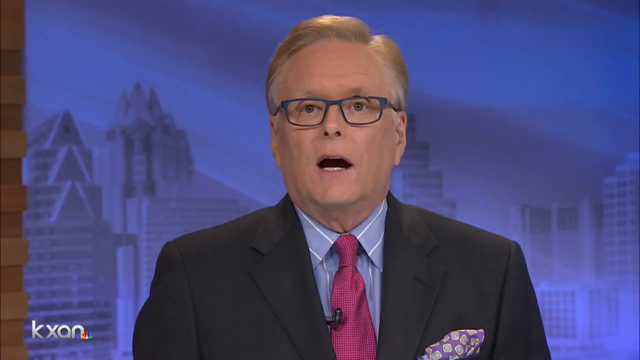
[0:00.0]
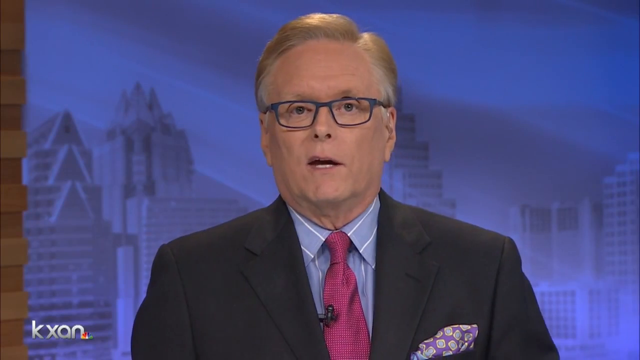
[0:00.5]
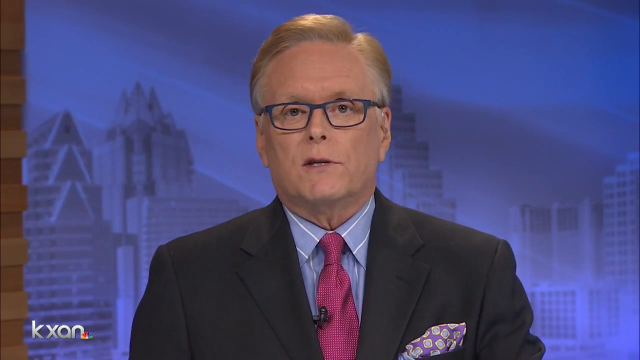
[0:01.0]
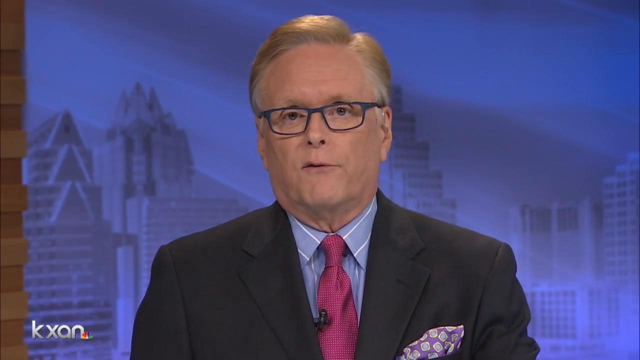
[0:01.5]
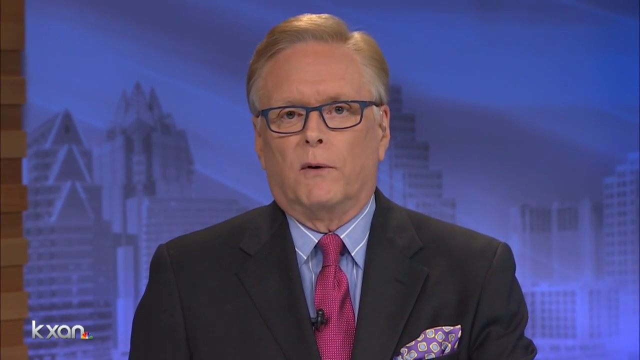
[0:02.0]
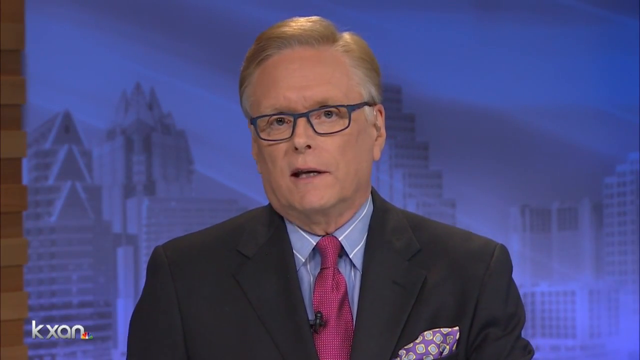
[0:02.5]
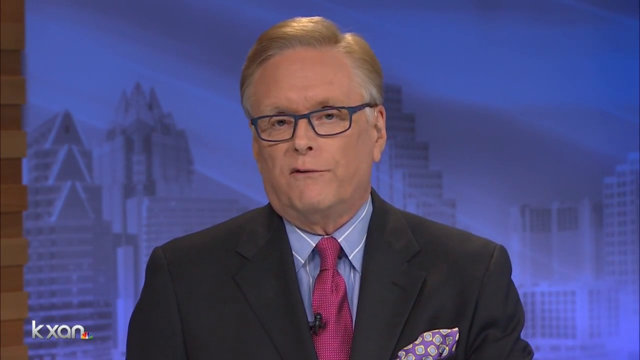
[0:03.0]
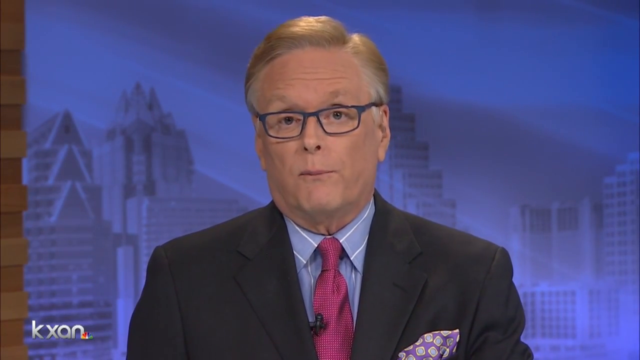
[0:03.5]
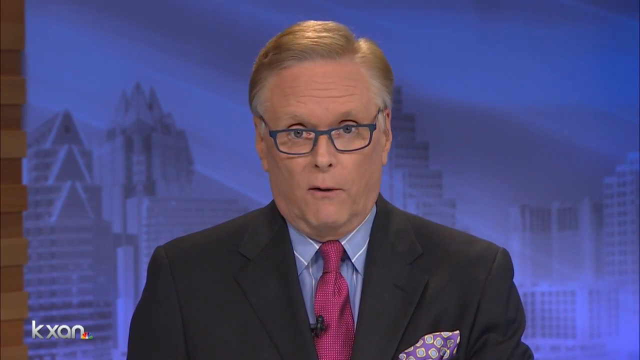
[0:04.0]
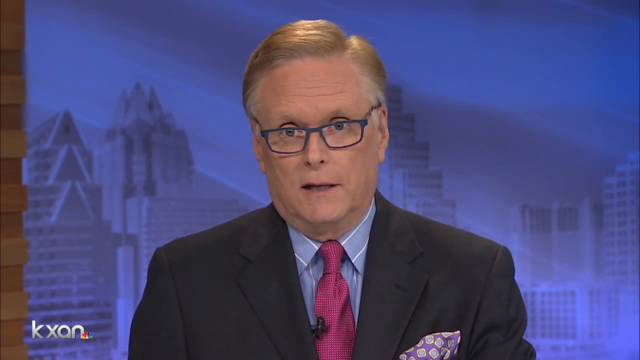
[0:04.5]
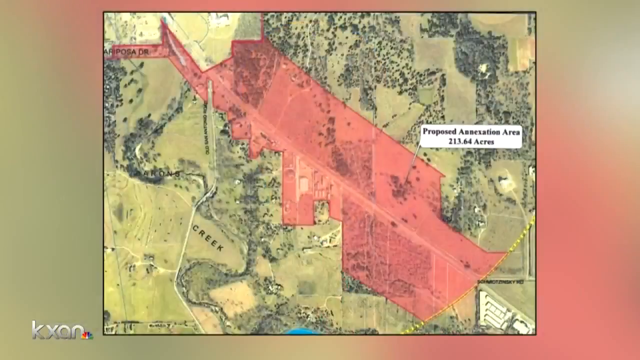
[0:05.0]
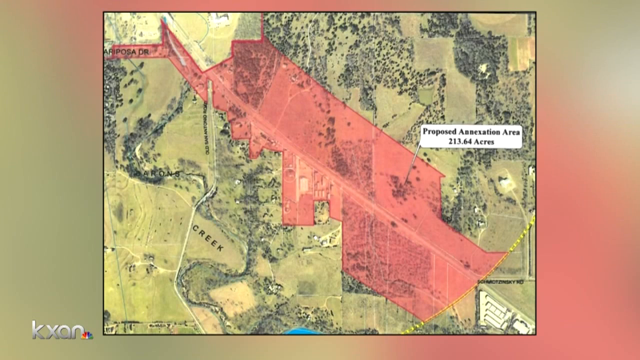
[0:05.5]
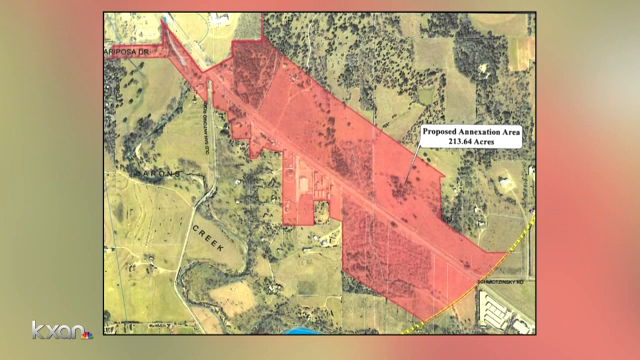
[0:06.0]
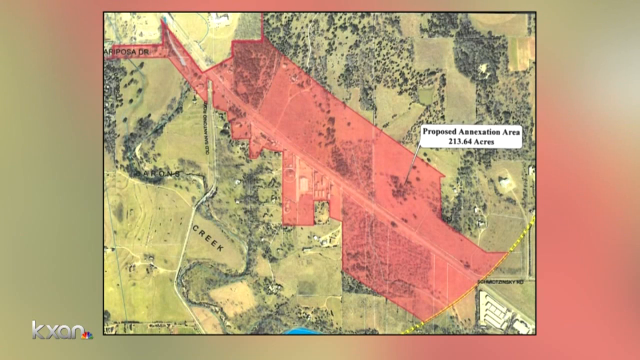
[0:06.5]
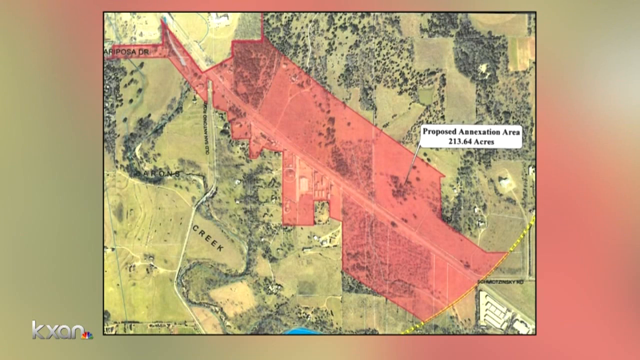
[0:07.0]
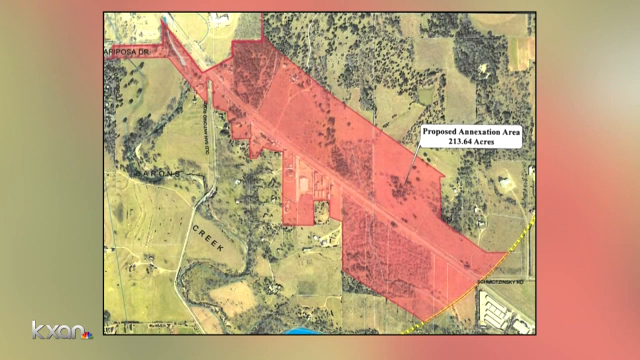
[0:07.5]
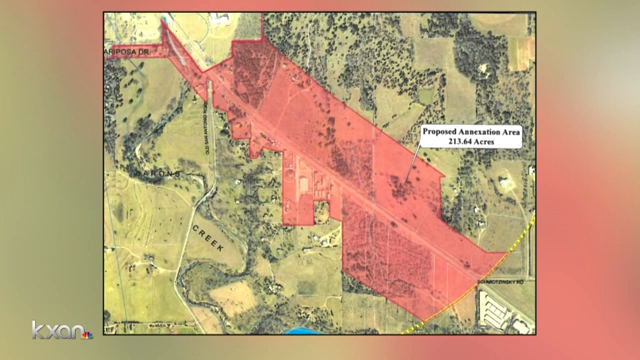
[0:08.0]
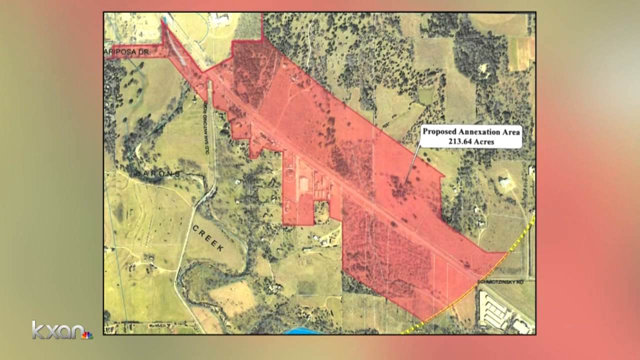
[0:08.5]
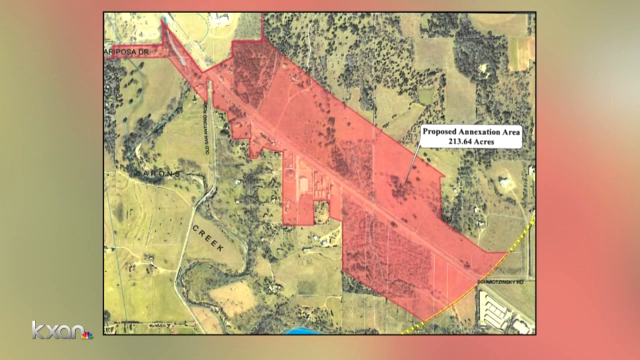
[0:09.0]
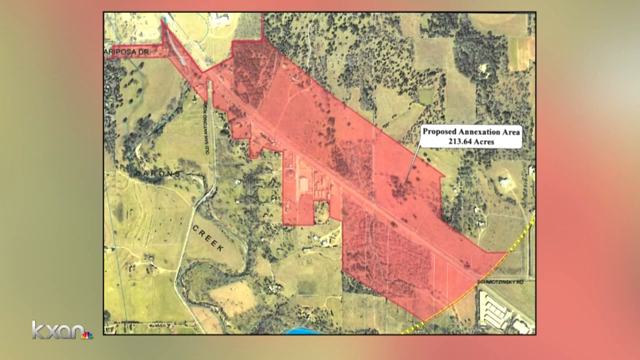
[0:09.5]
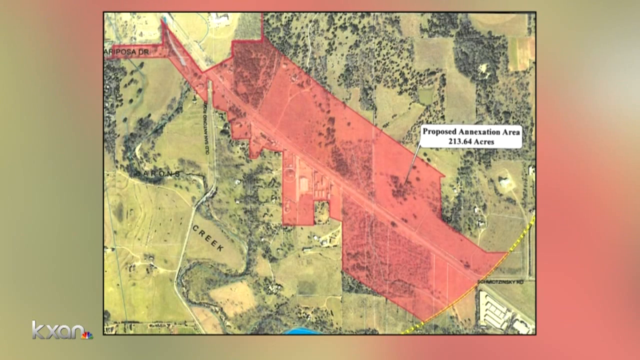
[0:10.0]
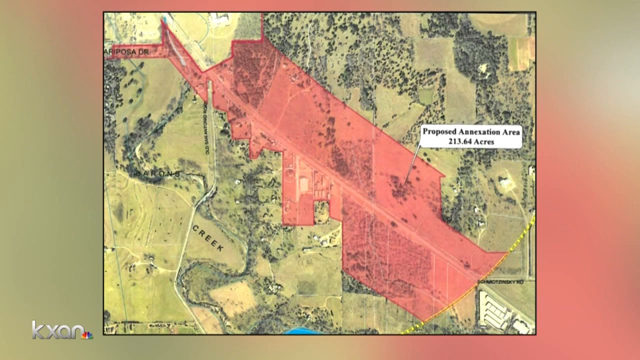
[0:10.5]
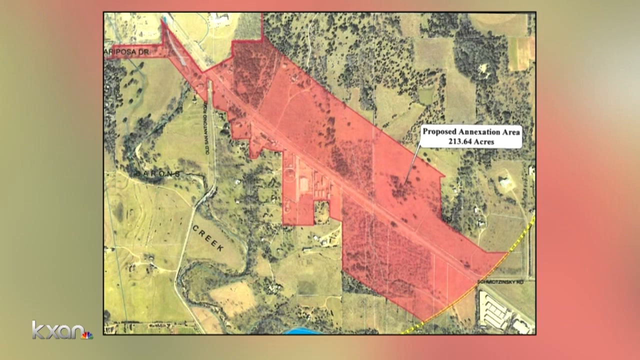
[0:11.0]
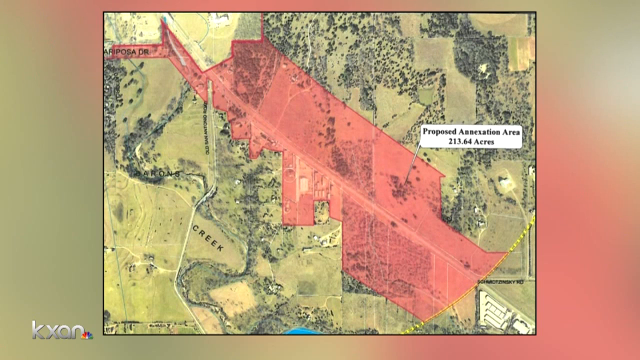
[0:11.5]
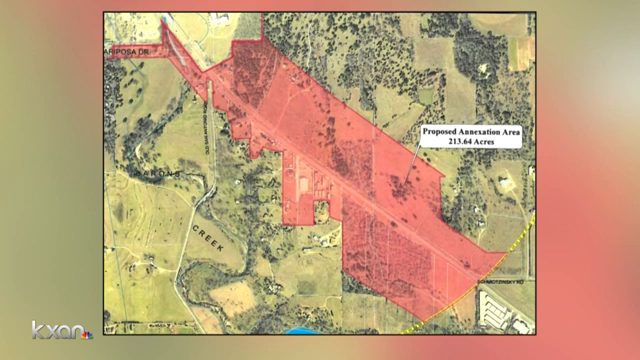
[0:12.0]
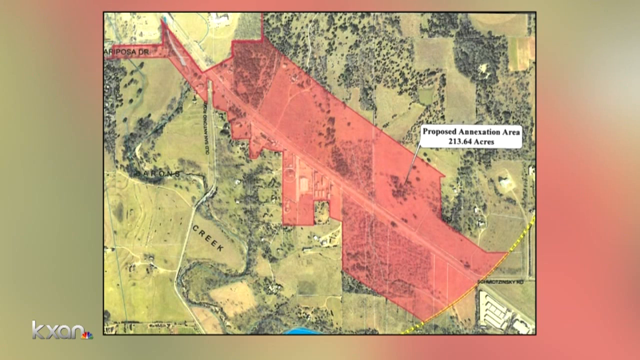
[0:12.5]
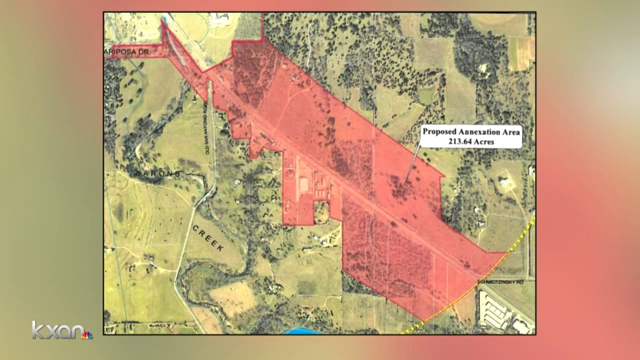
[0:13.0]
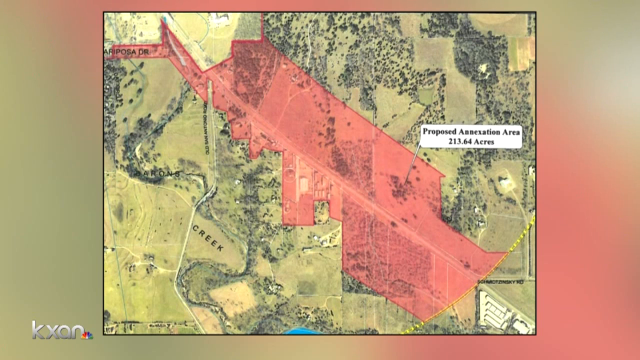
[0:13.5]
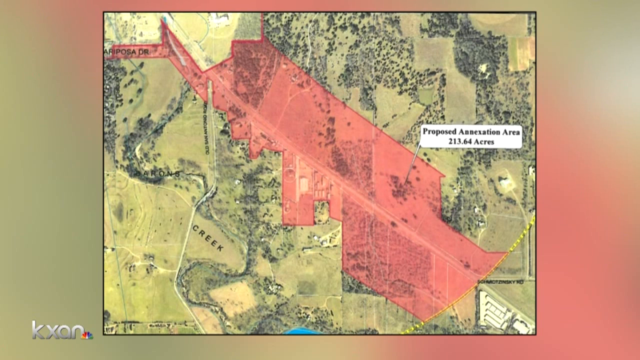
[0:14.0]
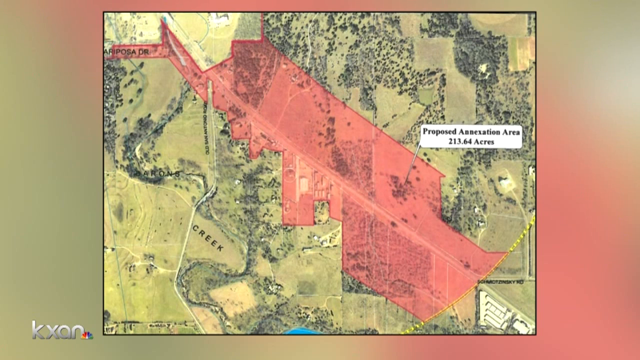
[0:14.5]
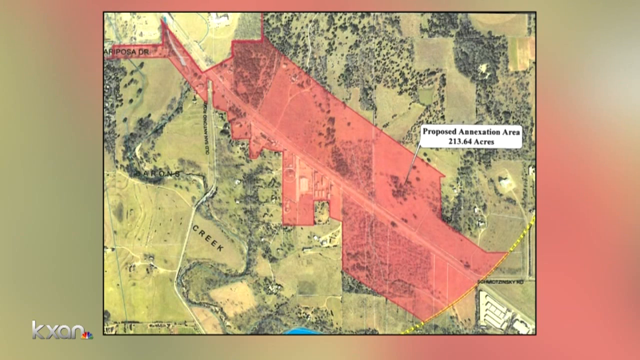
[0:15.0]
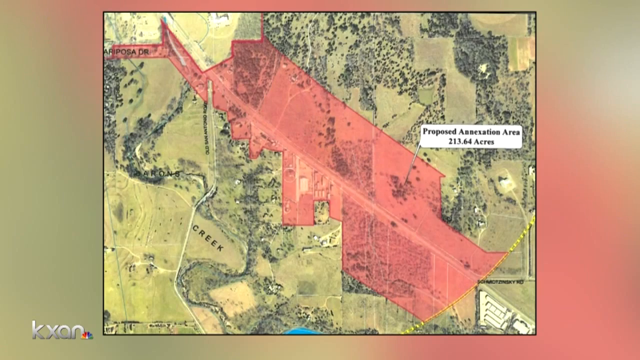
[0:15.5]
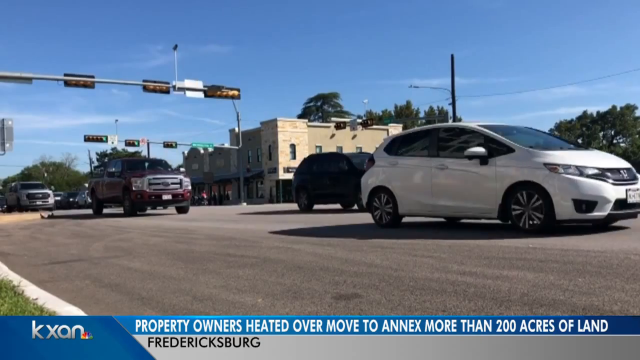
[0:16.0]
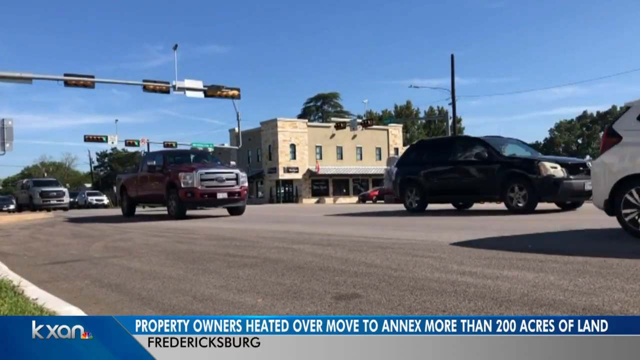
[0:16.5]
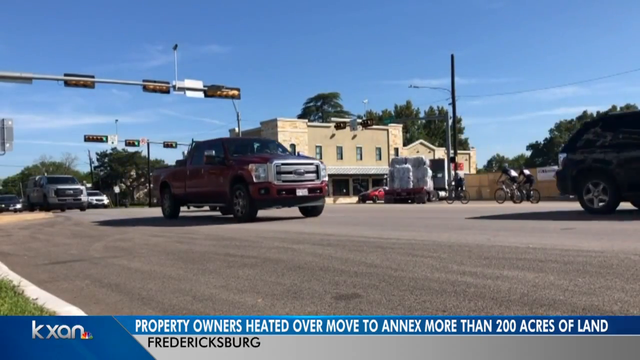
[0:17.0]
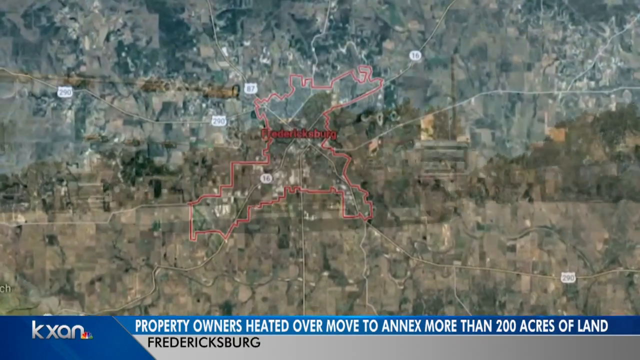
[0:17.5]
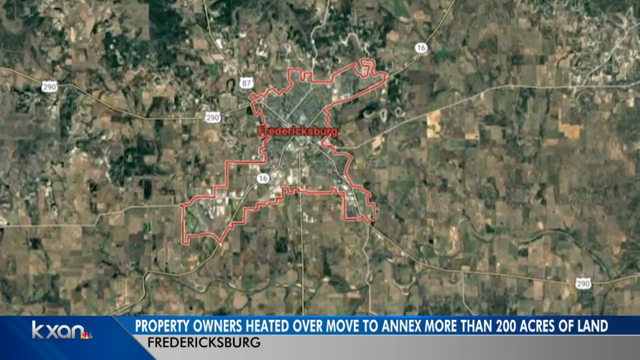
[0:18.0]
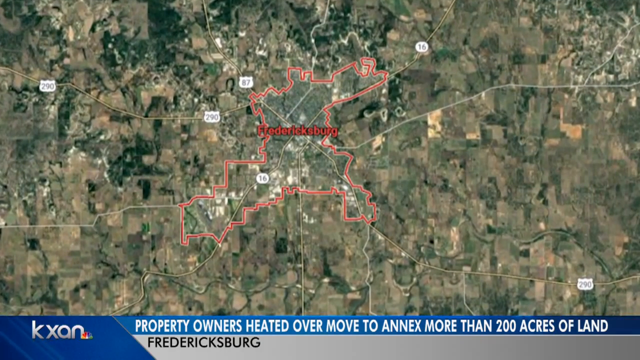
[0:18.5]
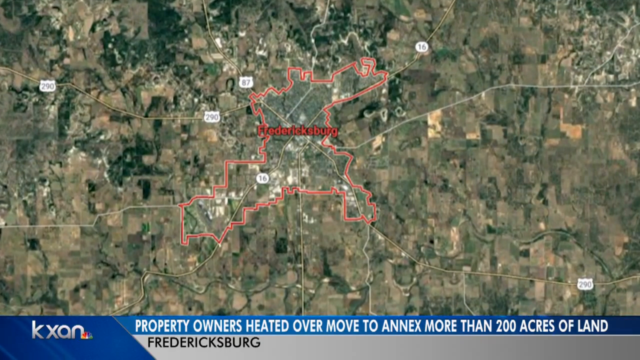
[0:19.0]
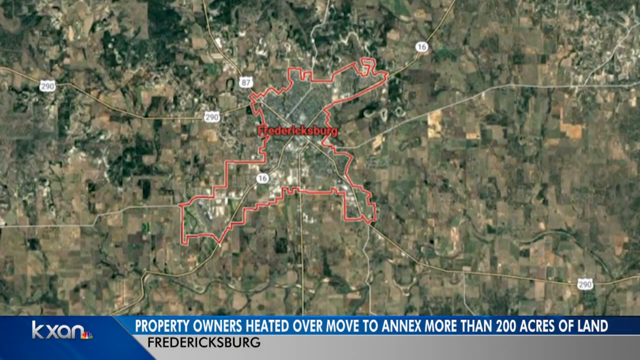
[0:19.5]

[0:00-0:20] A man in a dark jacket, a blue dress shirt and a red tie talks to the camera. He wears dark-rimmed glasses and has white hair on the sides of his head, and there is a blue background behind him. He looks like a news anchor, apparently for NBC. The video cuts to a map with a large section covered in red, showing a proposed annexation area that appears to be 213 acres. It then cuts to footage of cars driving, and then to a map with text reading "property owners heated over move to annex more than 200 acres of land to Fredericksburg." The map shows the sections of Fredericksburg being annexed, and some areas on the map are all green.